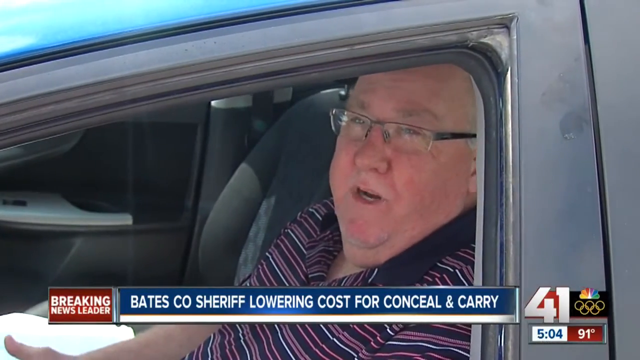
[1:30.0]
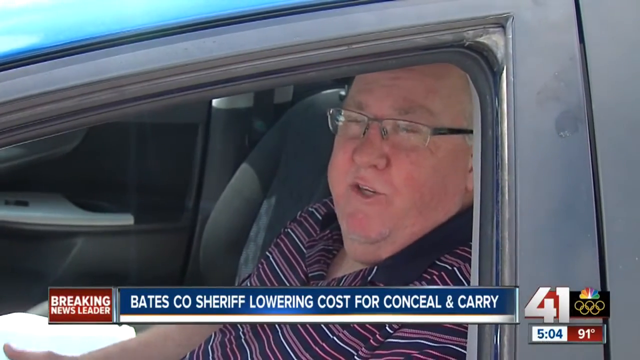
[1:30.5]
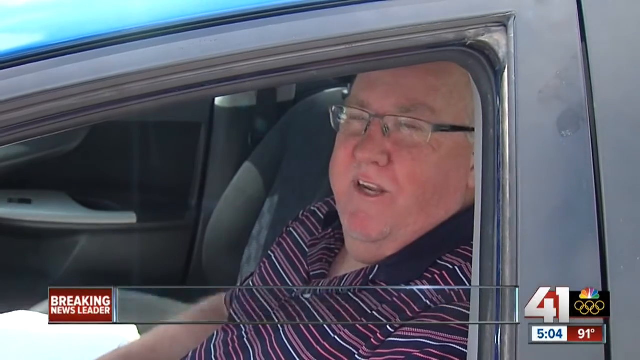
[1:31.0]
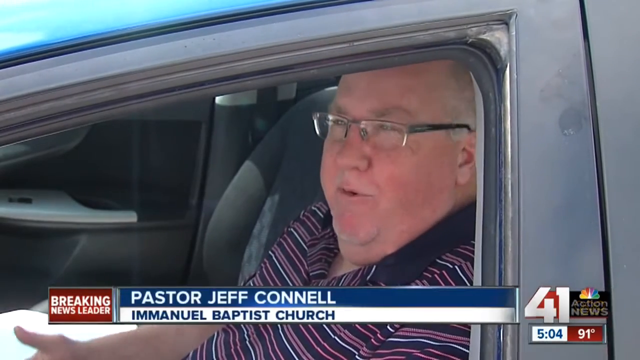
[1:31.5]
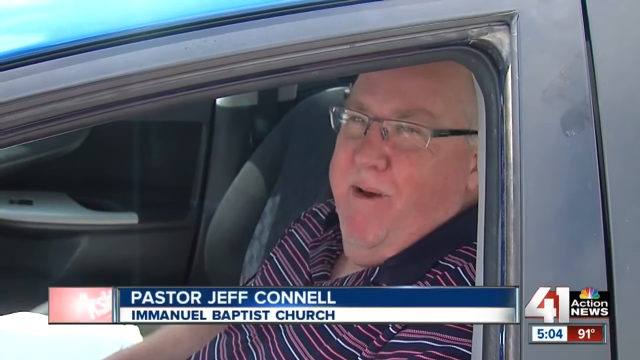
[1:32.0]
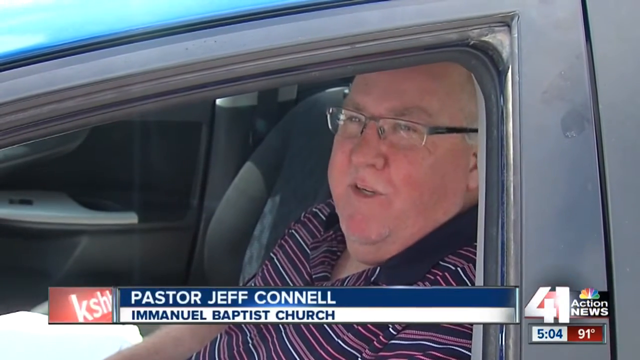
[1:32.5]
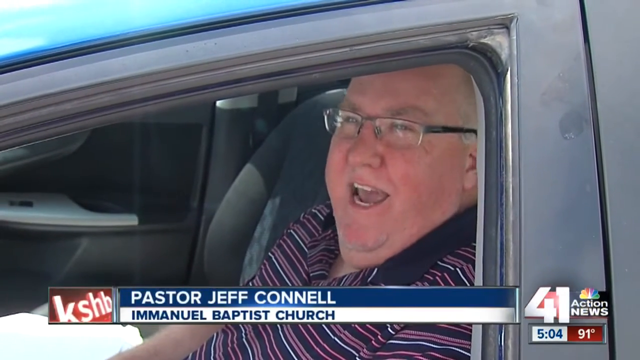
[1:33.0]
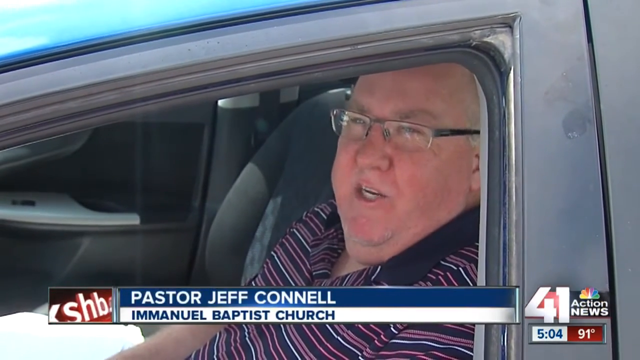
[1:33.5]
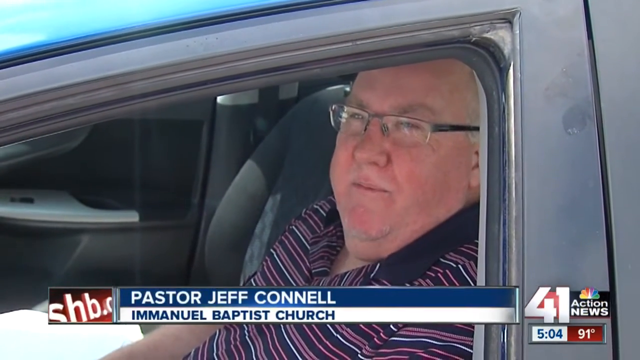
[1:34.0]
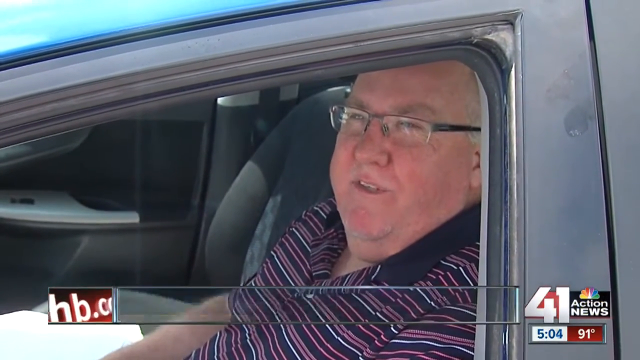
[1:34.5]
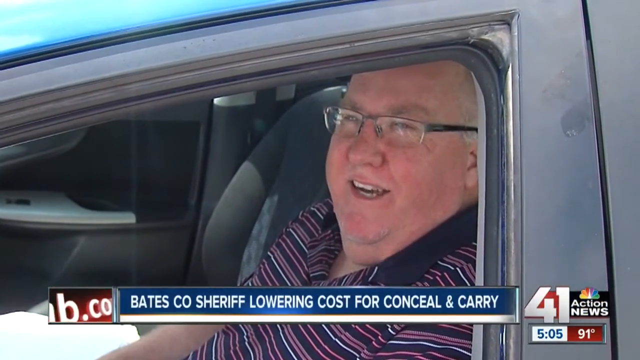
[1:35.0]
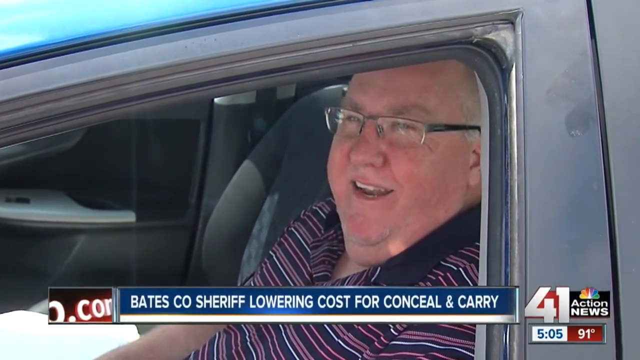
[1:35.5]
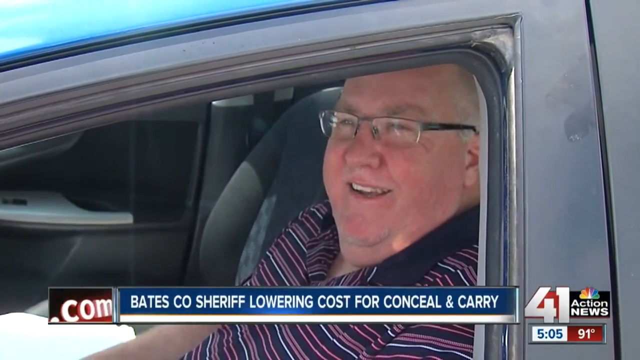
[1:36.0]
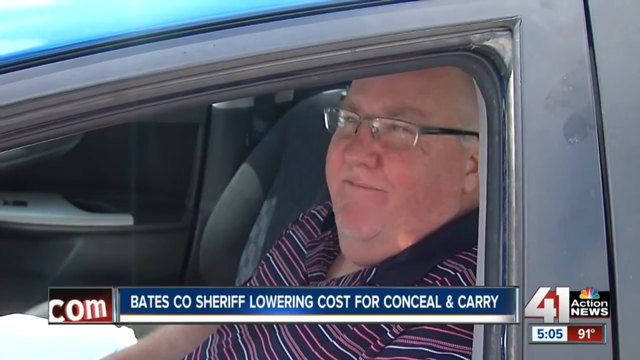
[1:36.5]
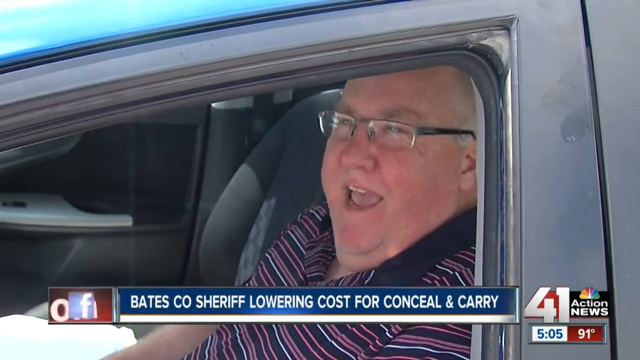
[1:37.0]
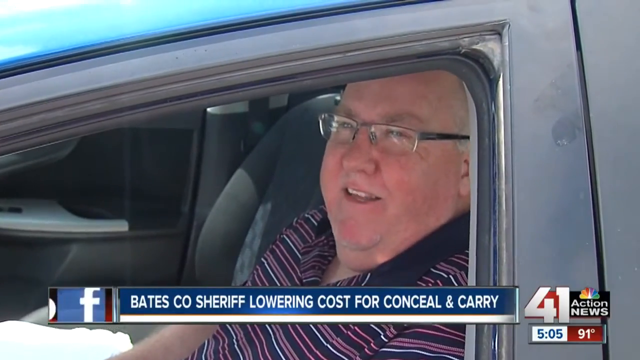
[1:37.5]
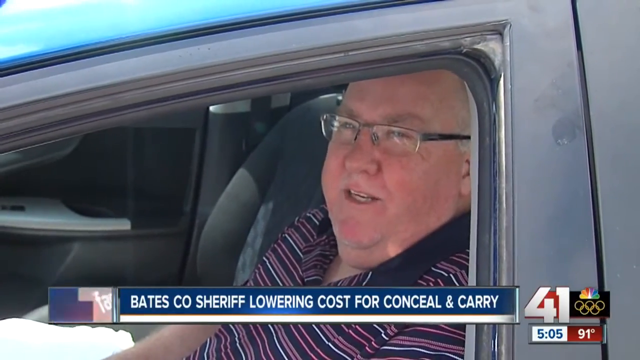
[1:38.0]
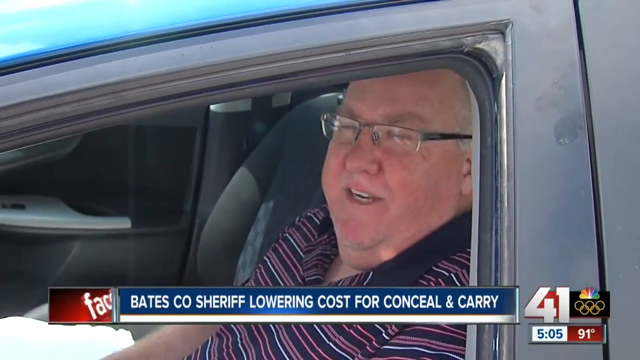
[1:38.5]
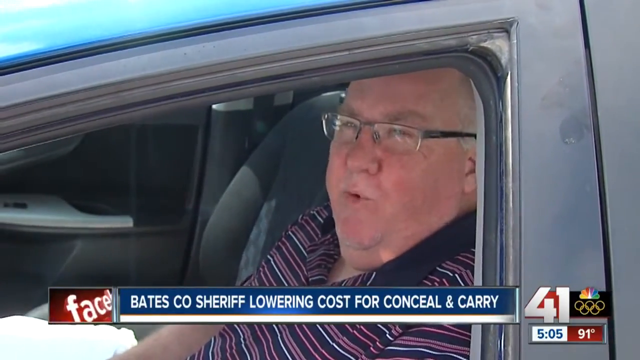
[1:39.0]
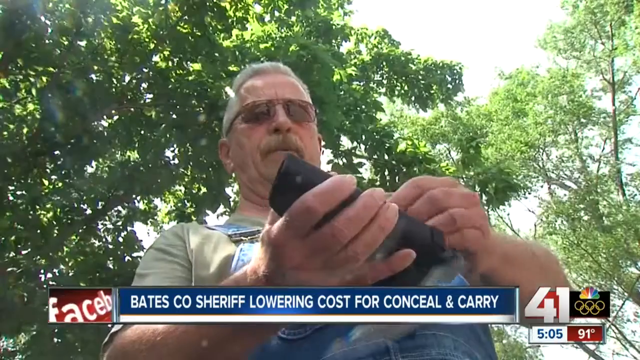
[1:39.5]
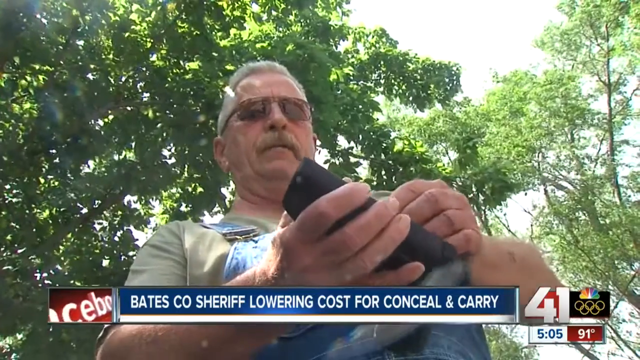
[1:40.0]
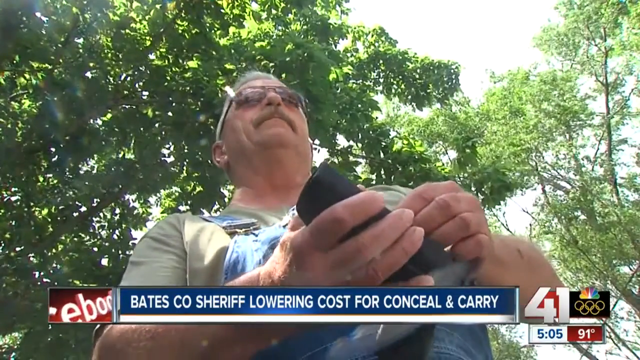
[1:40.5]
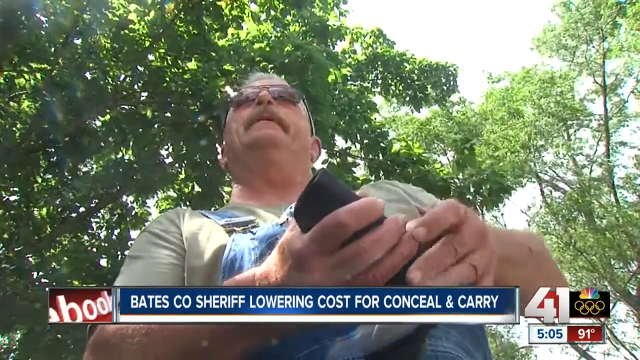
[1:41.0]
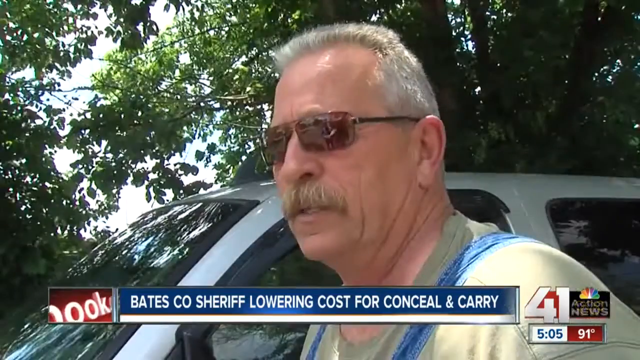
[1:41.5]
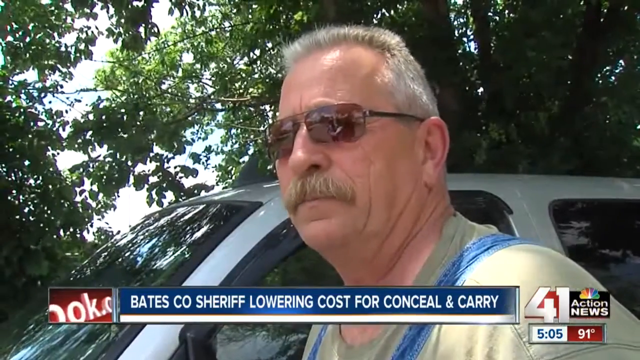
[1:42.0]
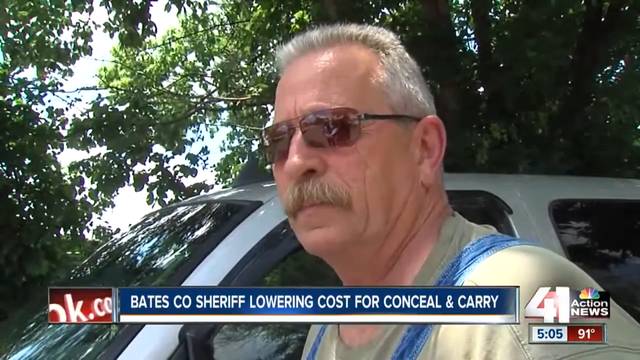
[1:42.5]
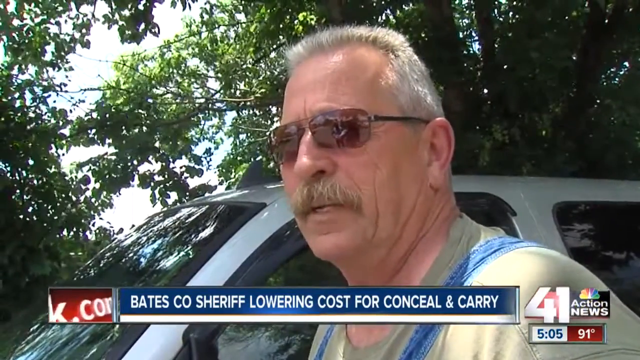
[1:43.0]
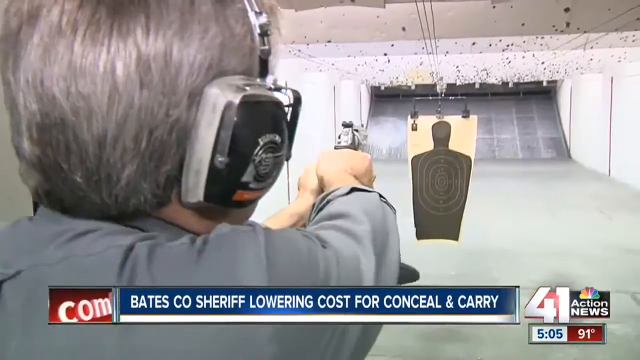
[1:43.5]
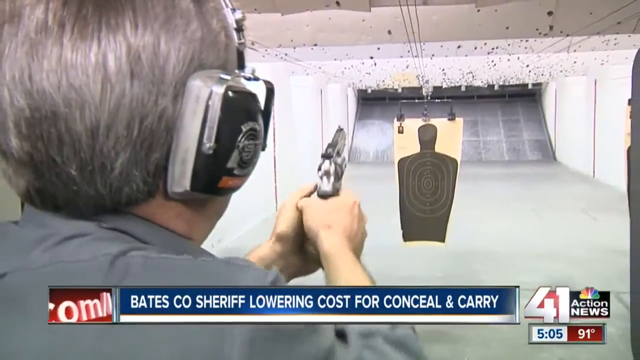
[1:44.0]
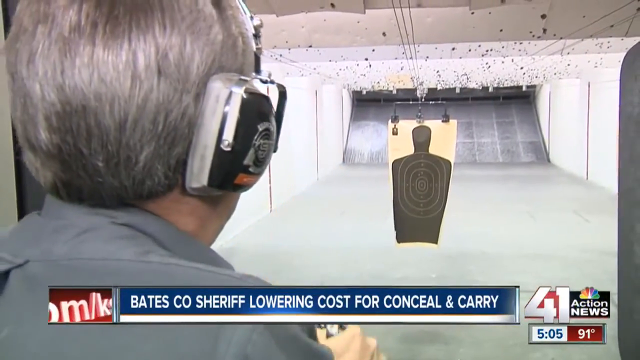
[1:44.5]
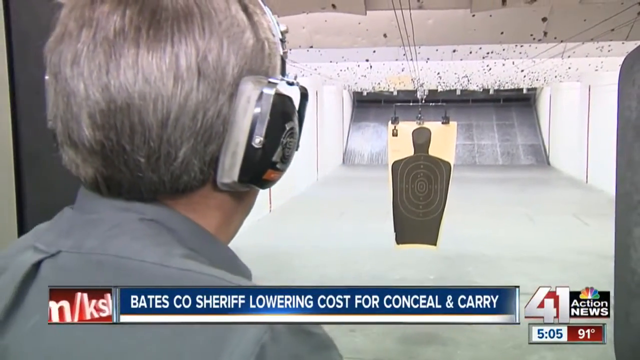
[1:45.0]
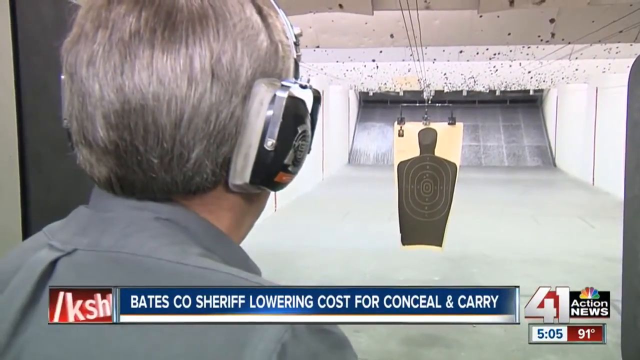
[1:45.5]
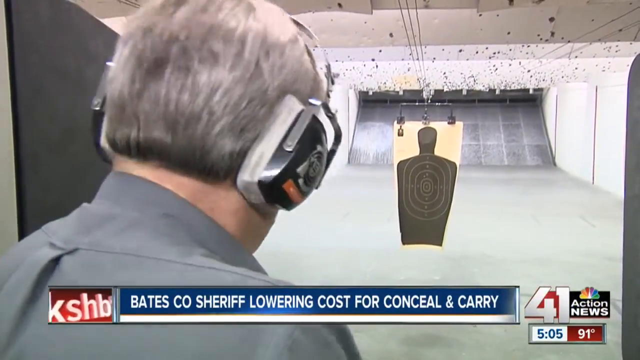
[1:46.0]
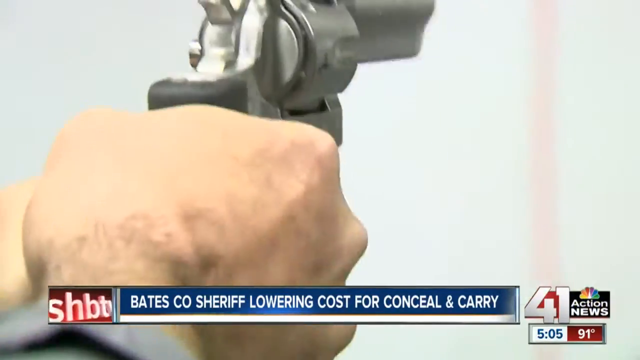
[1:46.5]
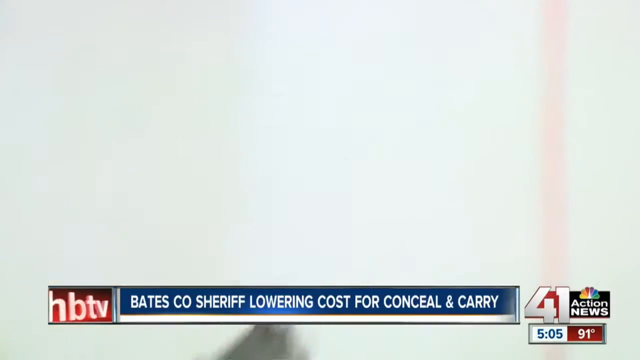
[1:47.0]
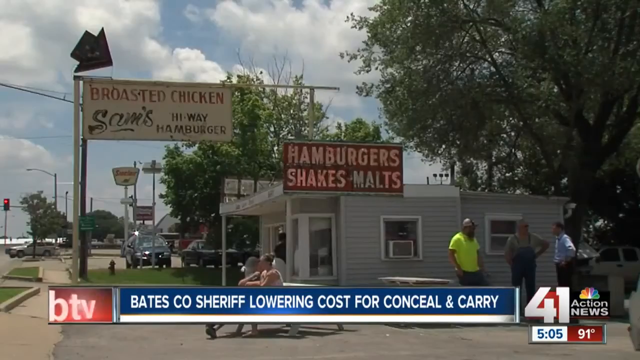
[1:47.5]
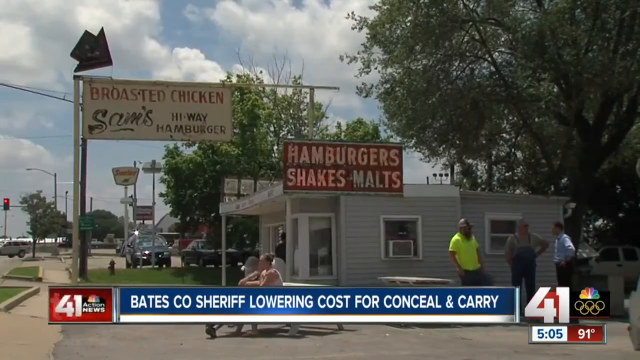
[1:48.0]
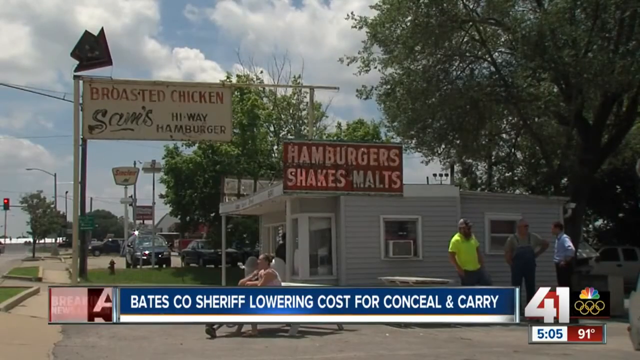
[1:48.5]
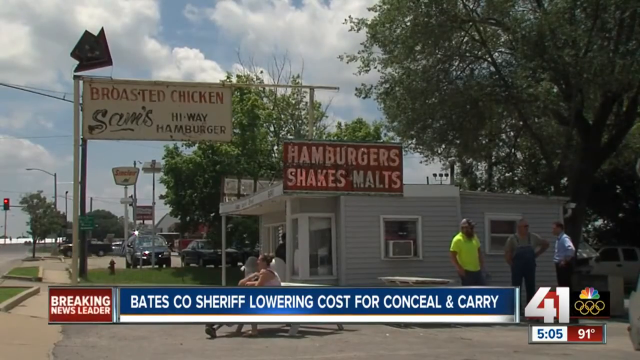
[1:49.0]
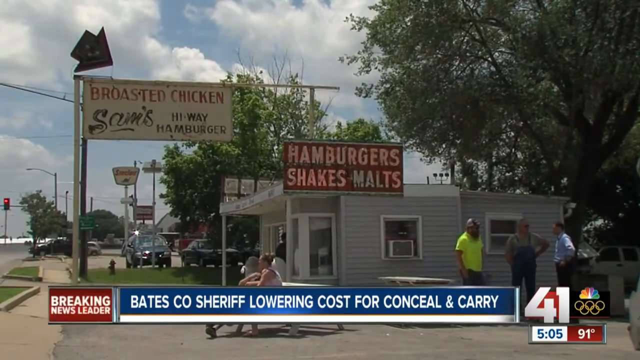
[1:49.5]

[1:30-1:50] A man wearing glasses talks to a news group from the driver's side of his car. On-screen text gives his name as "Pastor Jeff Connell of Emmanuel Baptist Church" and also reads "Bates Co. Sheriff lowering cost for conceal and carry." The man continues to talk. The video then goes to a lower shot looking up at a man with short gray hair, glasses and a mustache, wearing blue overalls, who uses both hands to mess with a black object. In a new shot facing him, he speaks. The scene shifts to an indoor firing range, where a person with gray hair, a gray shirt and ear protection holds a gun, shoots at a target in front of them and lowers the gun. A close-up shows someone firing a gun with both hands, and then the video shows a hamburger, shakes and malts restaurant with people outside.